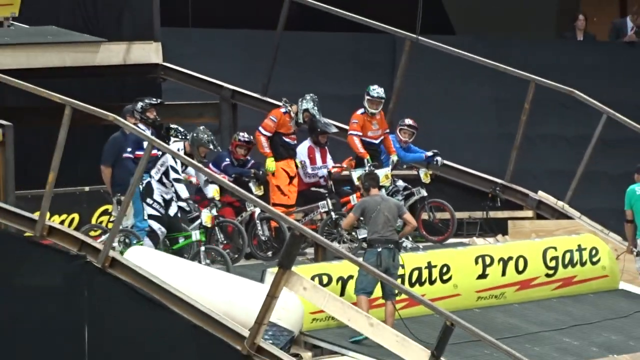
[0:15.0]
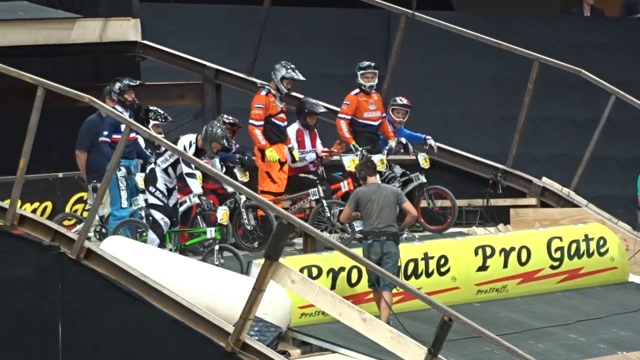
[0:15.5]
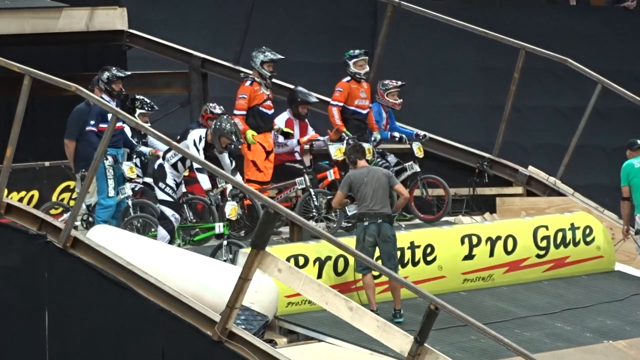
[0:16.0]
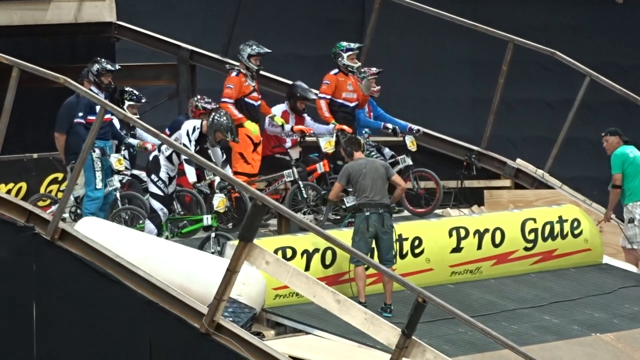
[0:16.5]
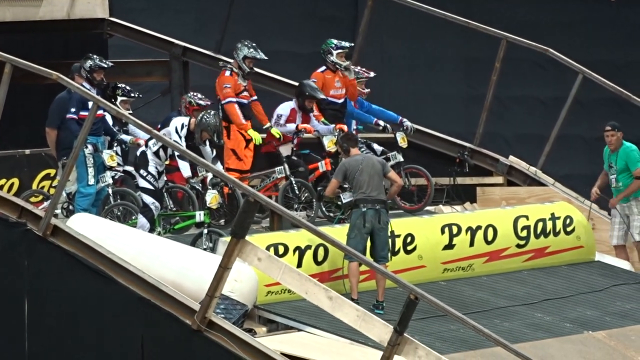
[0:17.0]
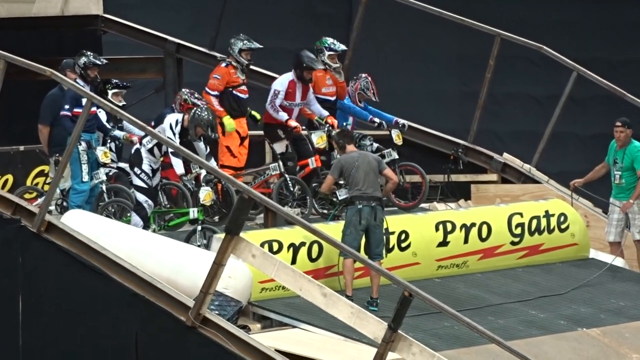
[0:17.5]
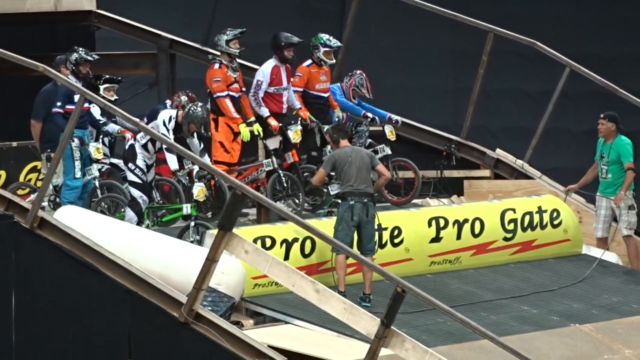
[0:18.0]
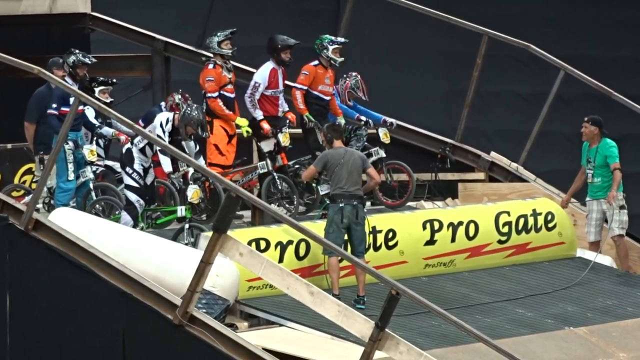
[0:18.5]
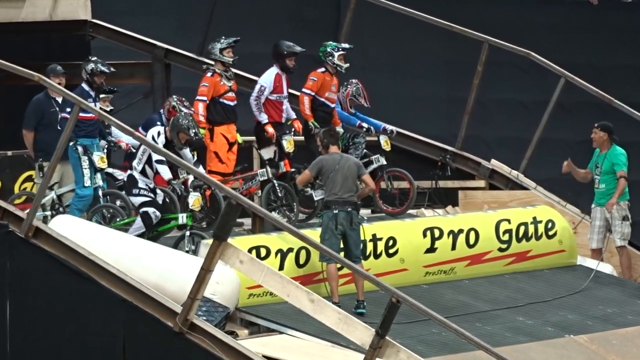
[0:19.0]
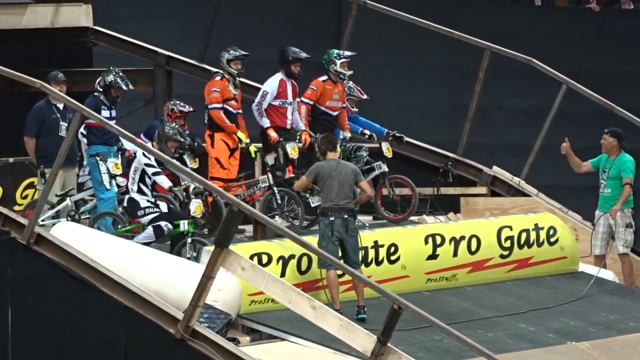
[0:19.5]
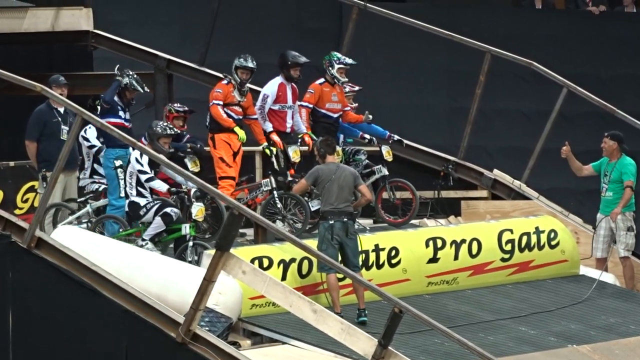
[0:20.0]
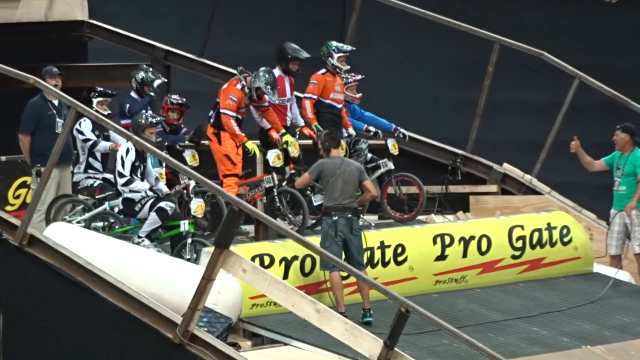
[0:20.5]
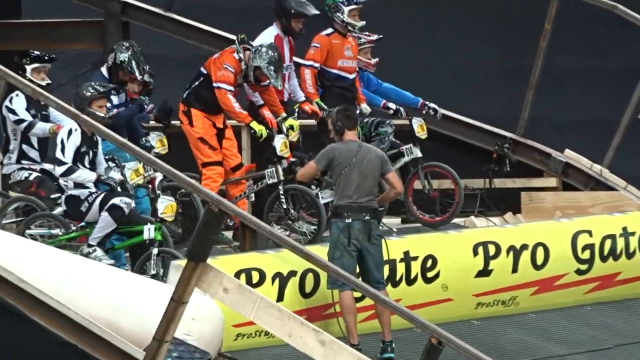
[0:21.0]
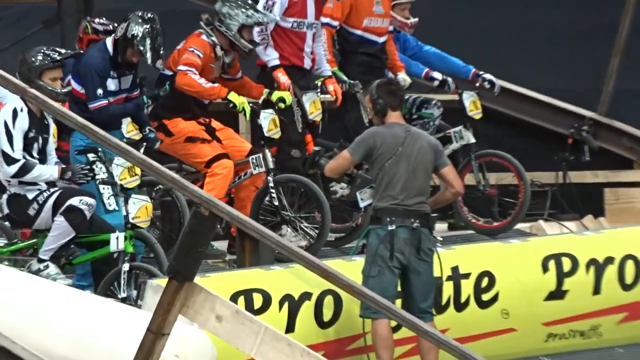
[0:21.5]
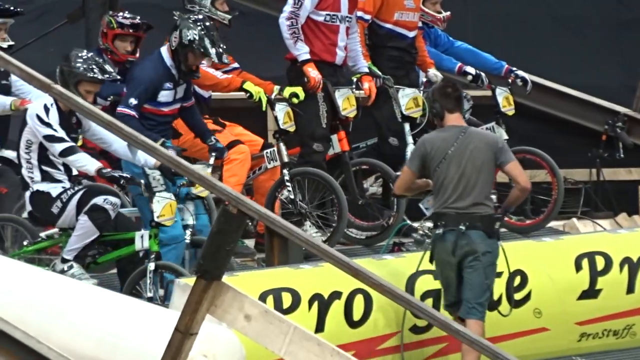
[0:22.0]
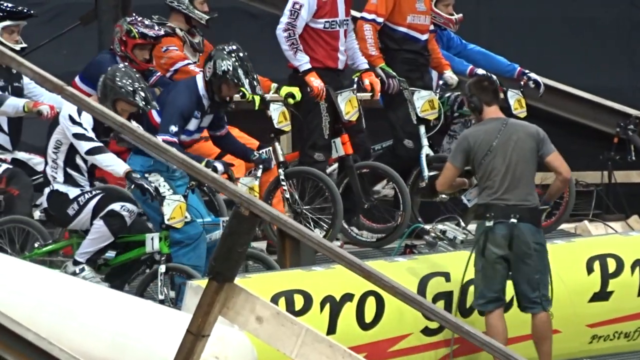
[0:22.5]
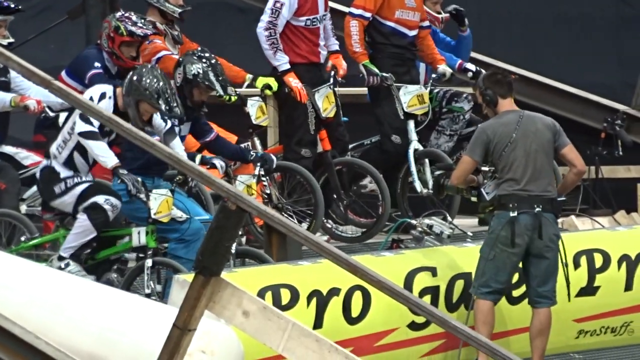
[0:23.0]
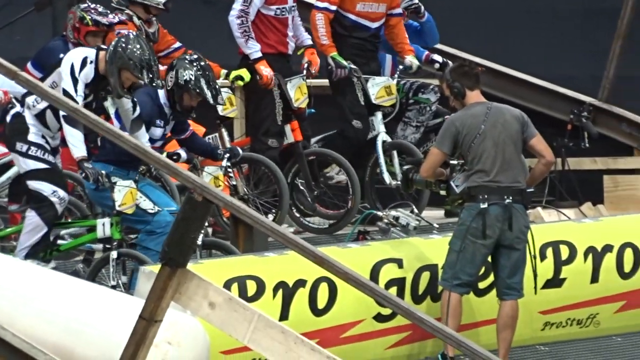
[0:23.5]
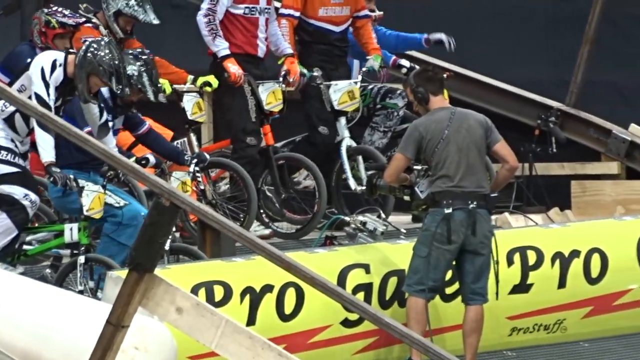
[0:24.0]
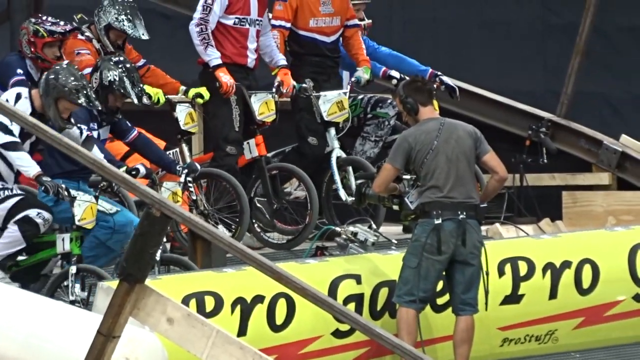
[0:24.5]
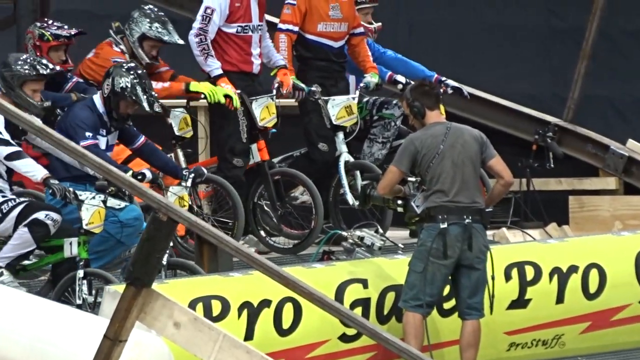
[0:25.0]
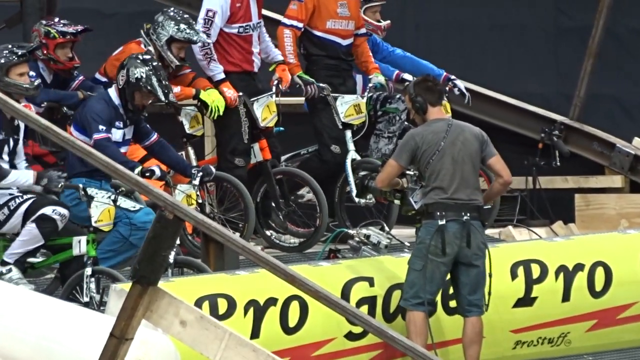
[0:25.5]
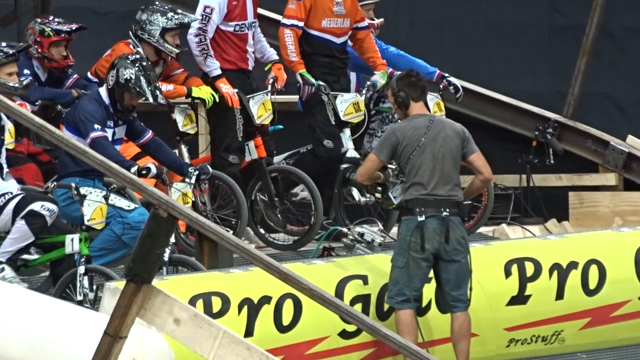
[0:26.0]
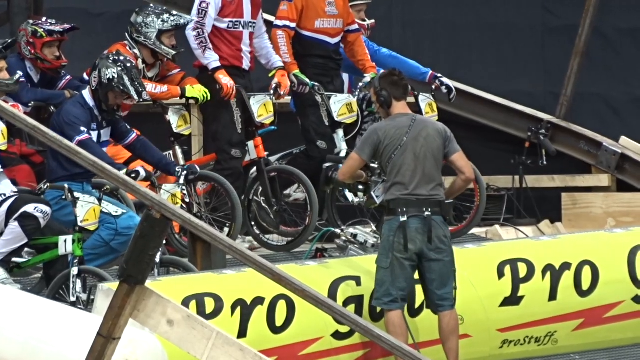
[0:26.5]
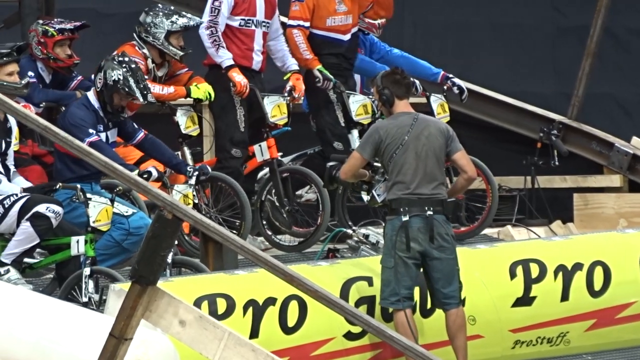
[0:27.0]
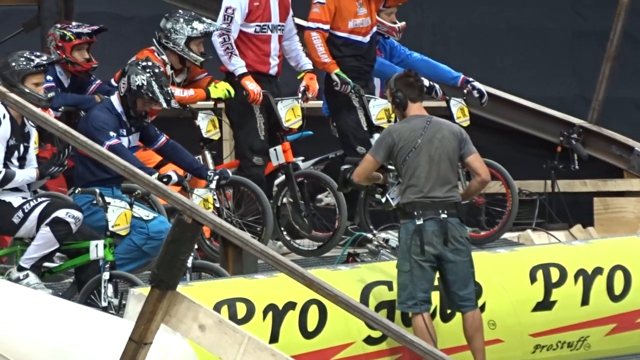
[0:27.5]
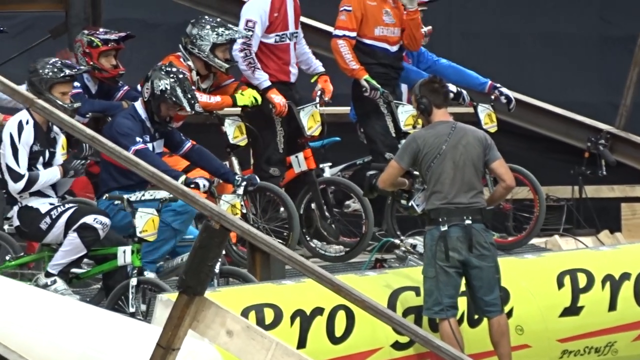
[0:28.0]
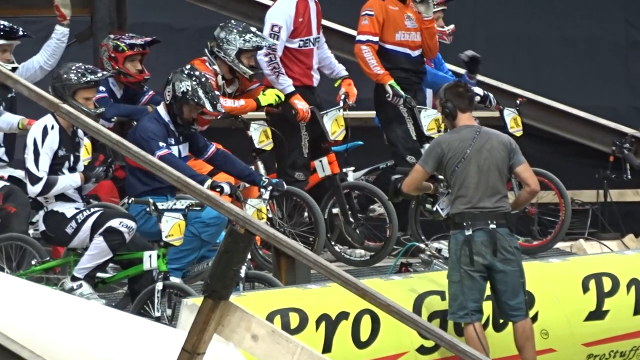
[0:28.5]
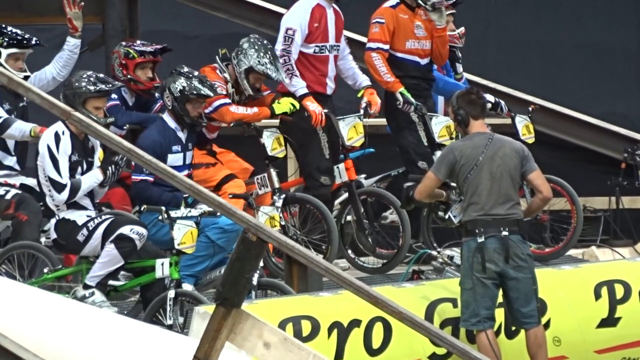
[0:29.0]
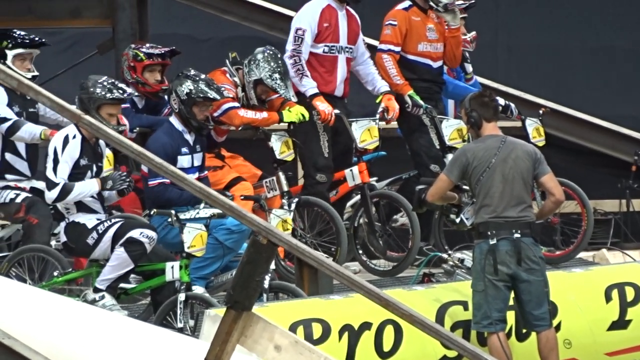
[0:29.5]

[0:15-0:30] The bikers continue preparing to race. They seem to be fiddling with their gear, sort of stretching and warming up. There are nine bikers, and a cameraman appears to be trying to move them. They all look like they are trying to hype themselves up a little. The shot is tighter, and the same crowd is visible. They seem to be competing in some kind of championship.